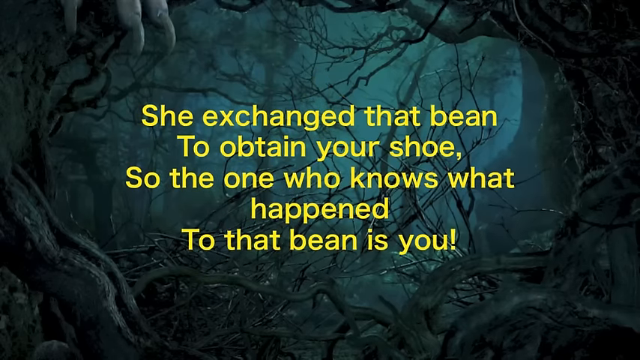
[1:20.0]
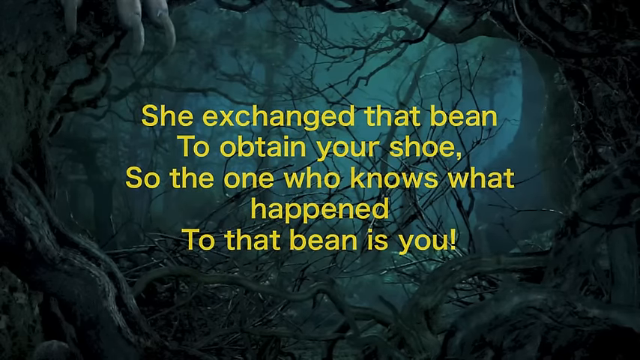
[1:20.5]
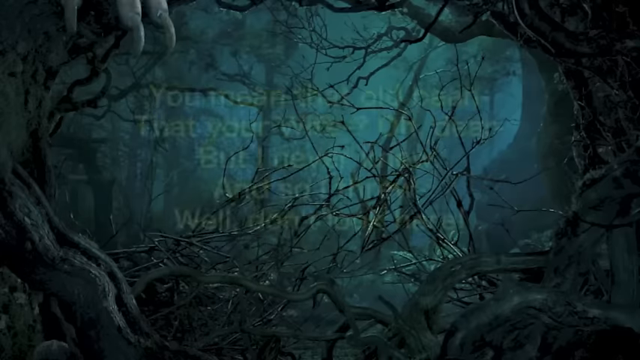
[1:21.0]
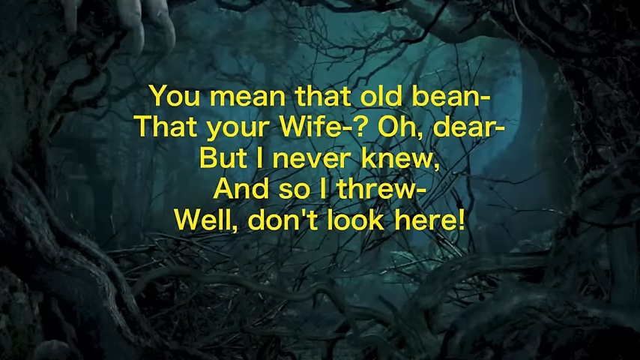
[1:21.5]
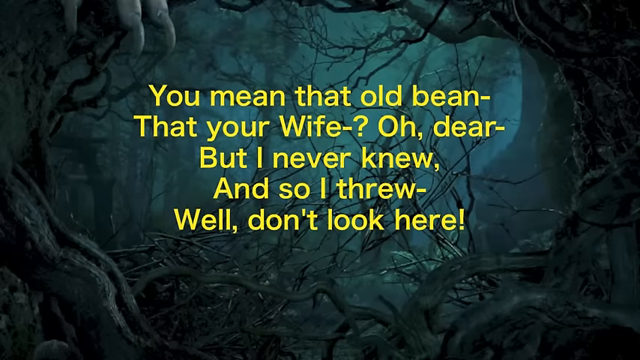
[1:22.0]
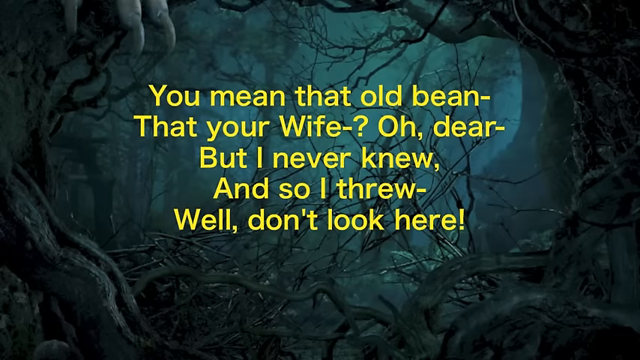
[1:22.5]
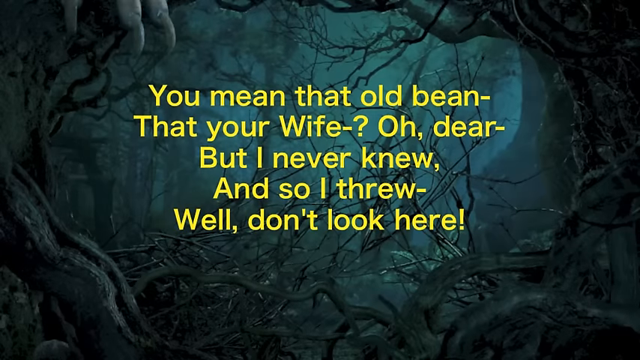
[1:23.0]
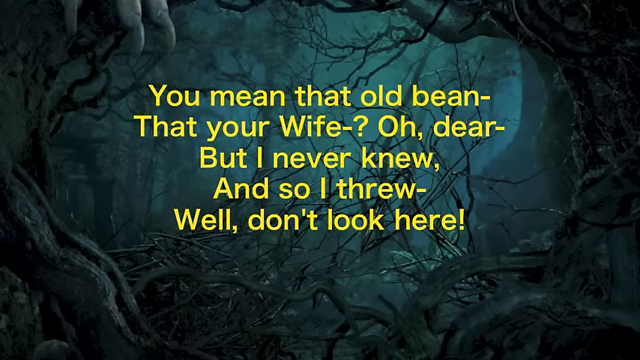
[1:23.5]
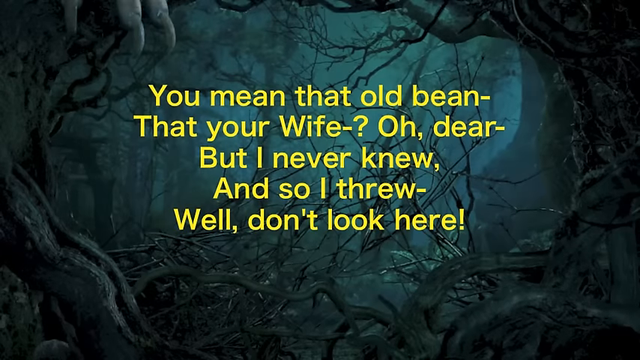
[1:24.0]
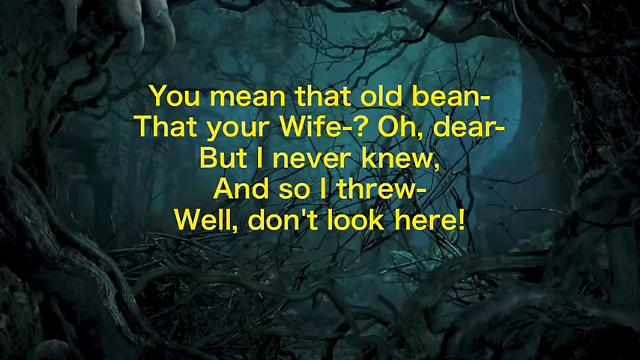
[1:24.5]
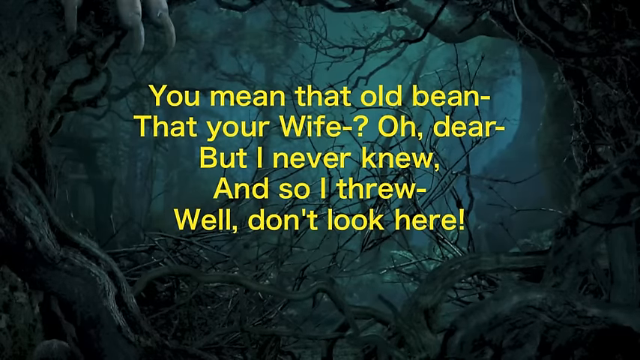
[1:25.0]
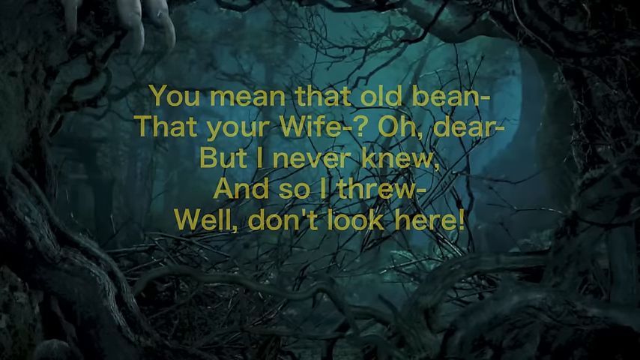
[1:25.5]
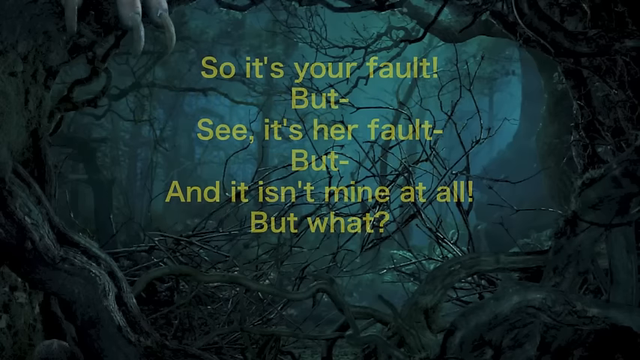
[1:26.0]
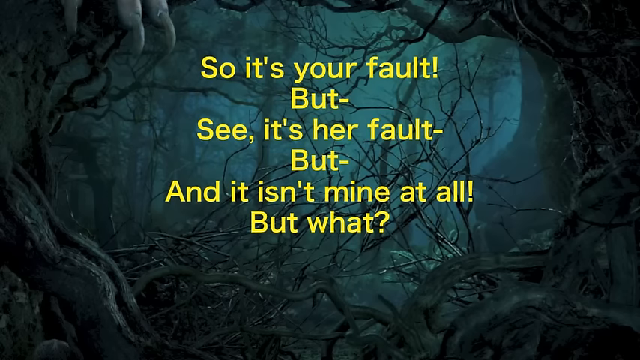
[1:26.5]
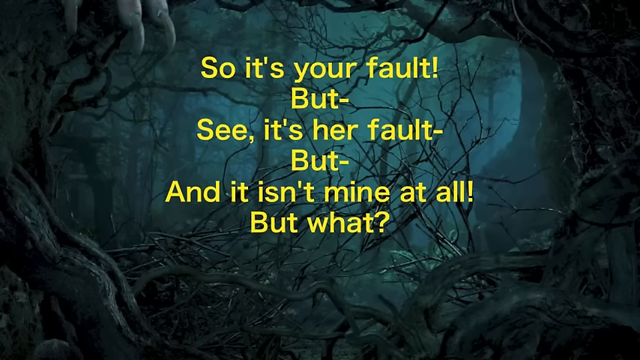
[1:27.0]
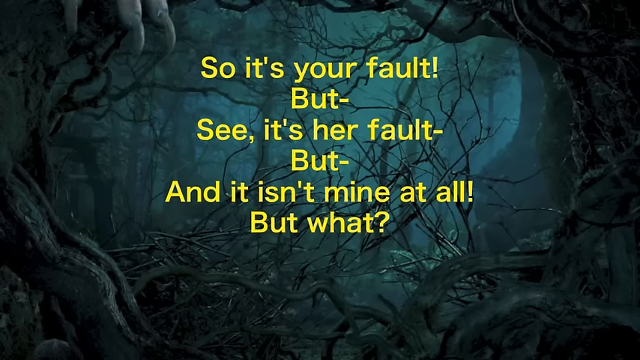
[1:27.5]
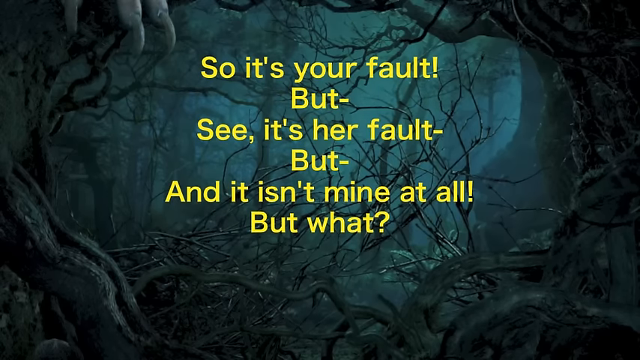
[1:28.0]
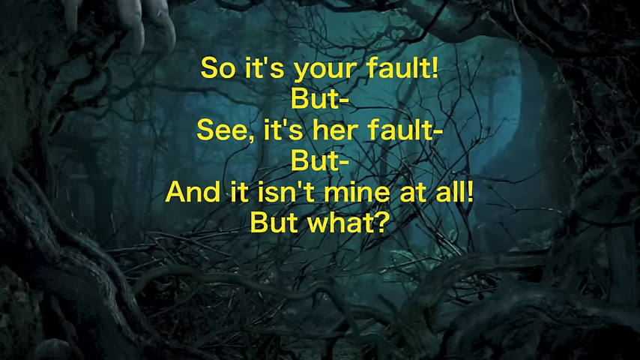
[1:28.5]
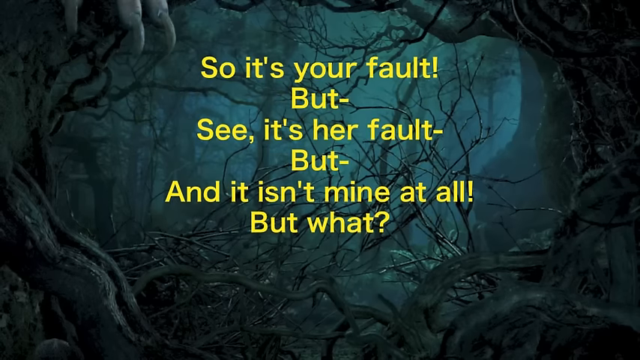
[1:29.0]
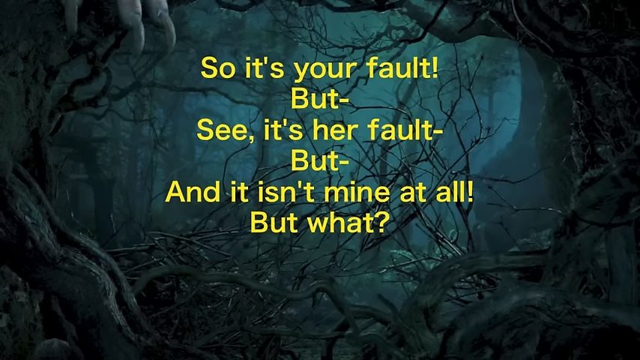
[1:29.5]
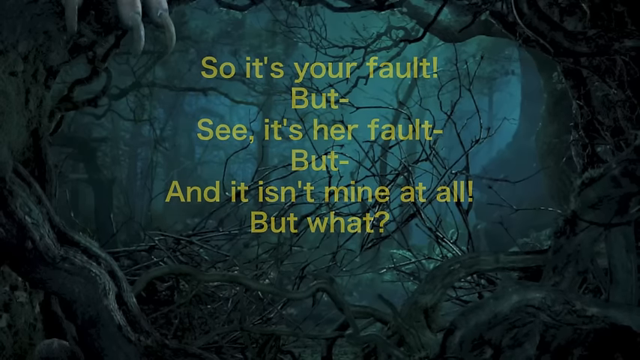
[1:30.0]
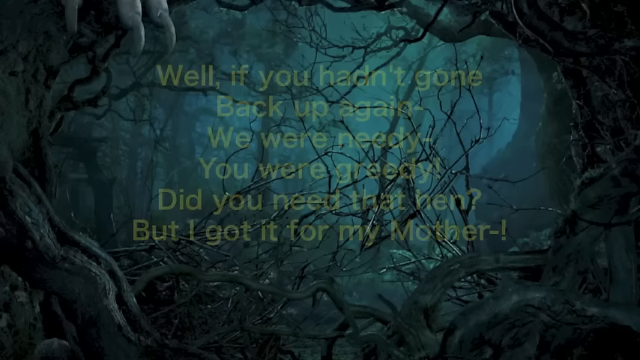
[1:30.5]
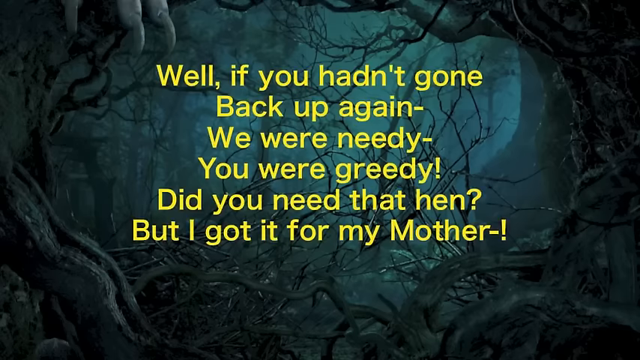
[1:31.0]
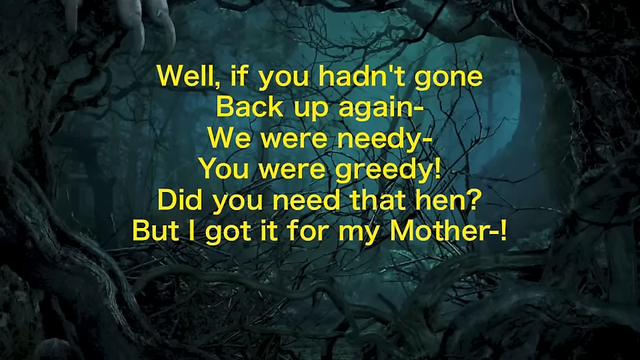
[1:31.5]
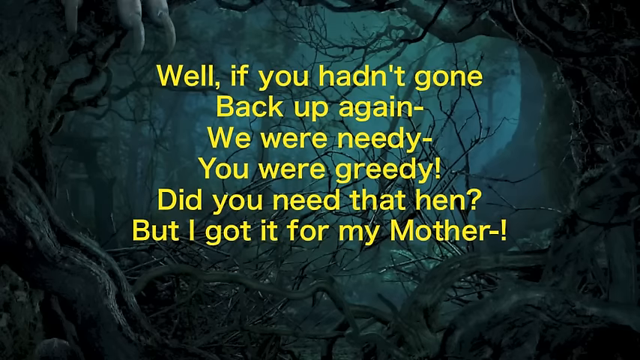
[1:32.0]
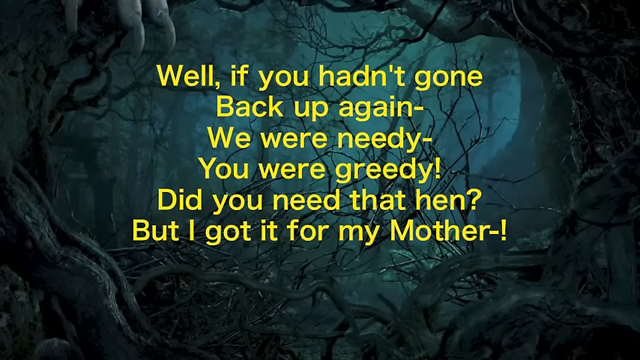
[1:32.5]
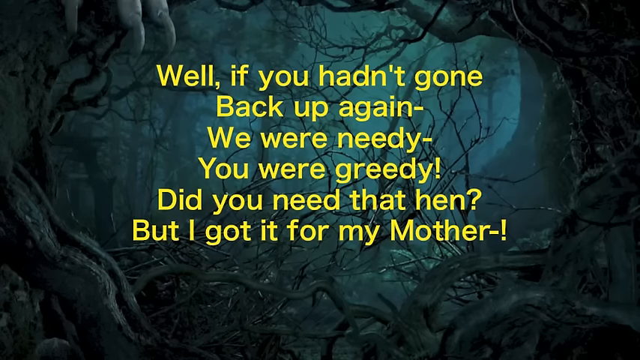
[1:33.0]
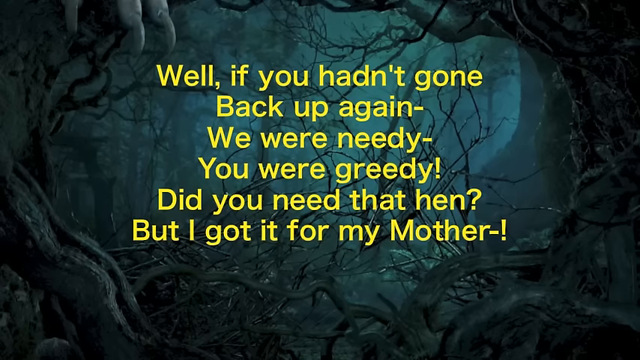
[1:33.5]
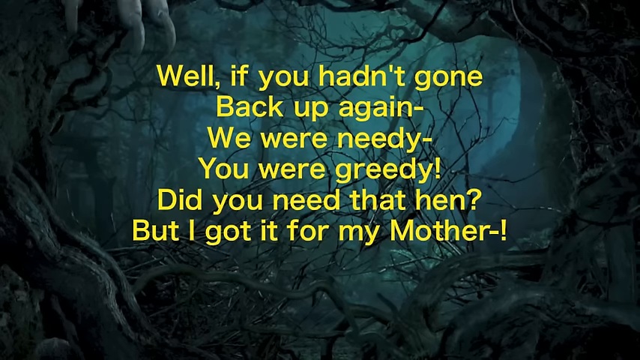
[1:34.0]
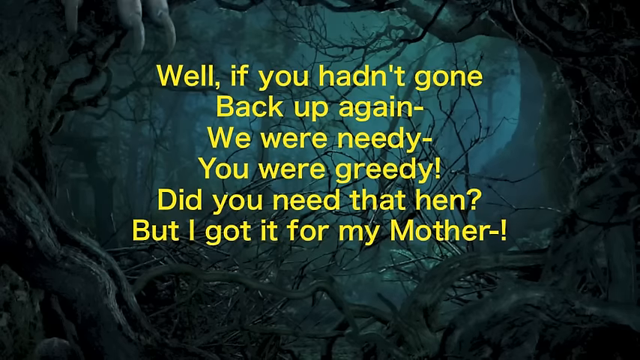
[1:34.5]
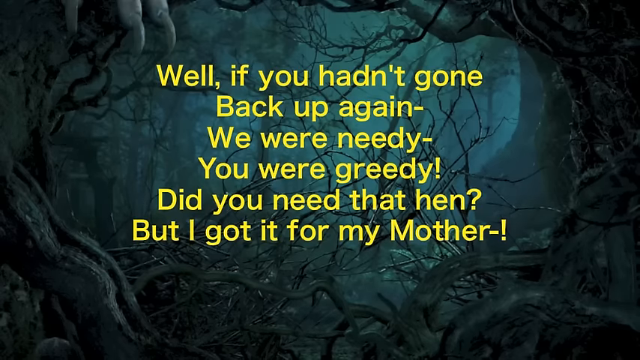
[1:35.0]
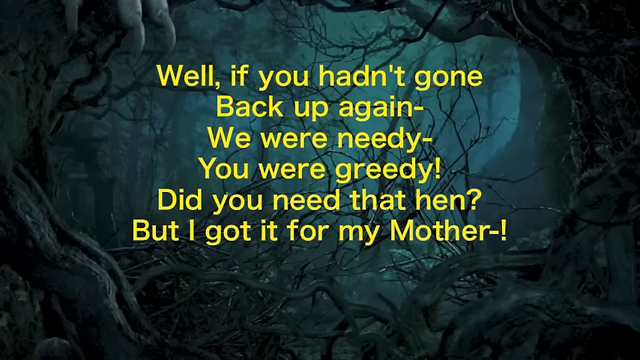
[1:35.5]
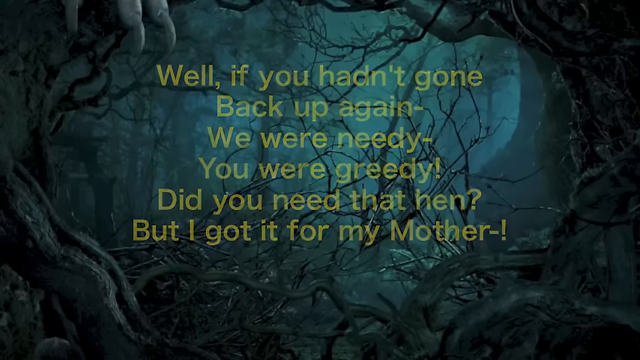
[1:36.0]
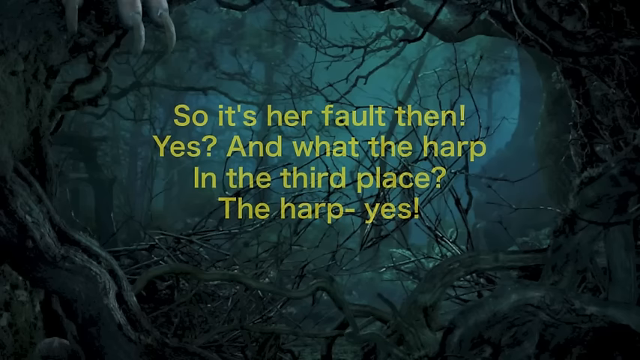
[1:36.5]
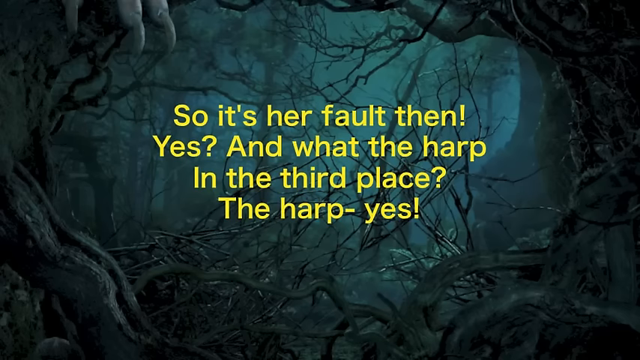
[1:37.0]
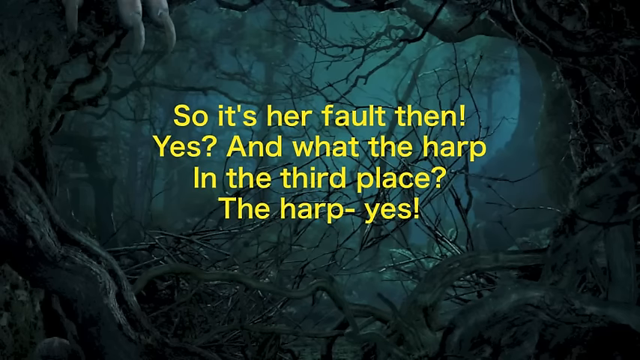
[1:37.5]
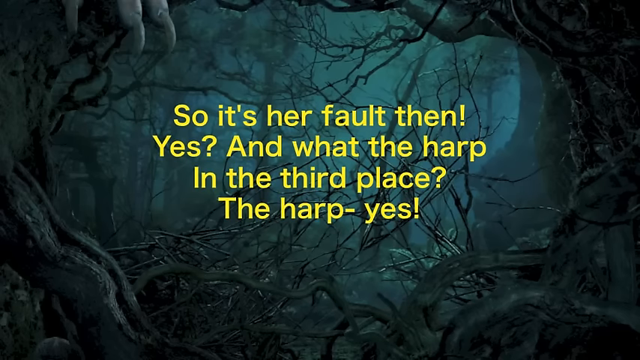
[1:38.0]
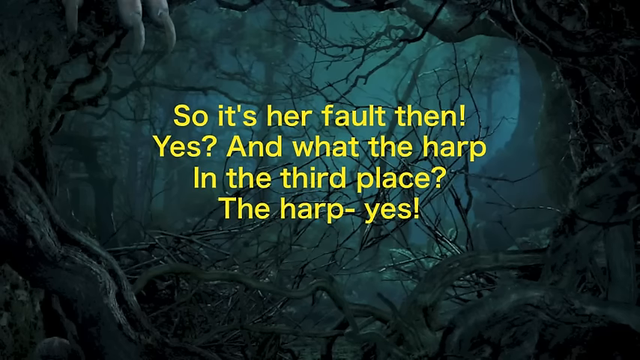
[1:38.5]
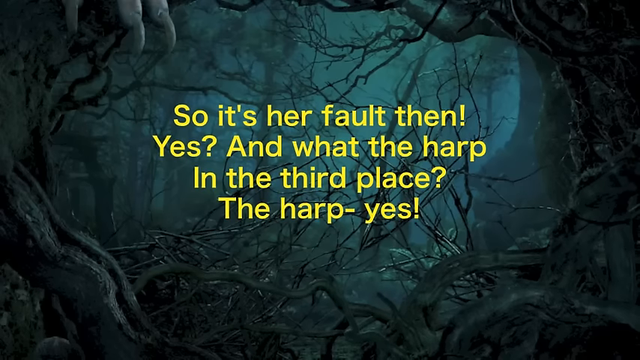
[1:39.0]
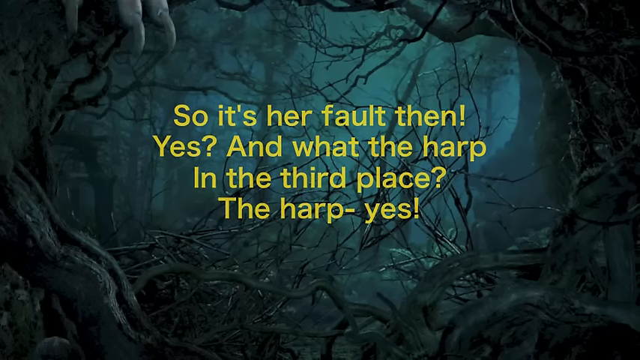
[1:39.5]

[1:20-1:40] The same static background continues unchanged, with only yellow text appearing on the screen. The text includes "Oh dear, but I never knew. And so I threw. Well, don't look here.", then "So, it's your fault, but, see, it's her fault, but, and it isn't mine at all, but what?", then lines including "We were needy, you were greedy, did you need that hen? But I got it for my mother." and "So, it's her fault then, yes, and what the harp in the third place, the harp, yes." Toward the end, another group of text appears too briefly to be read.